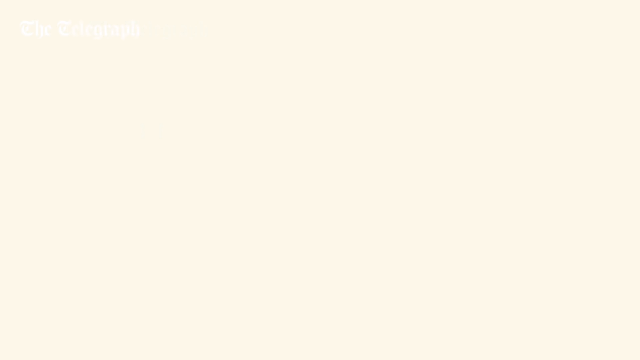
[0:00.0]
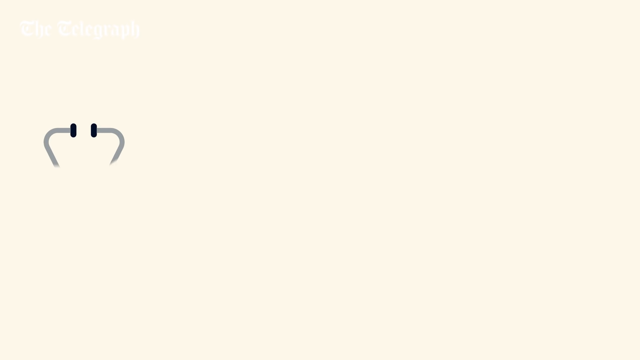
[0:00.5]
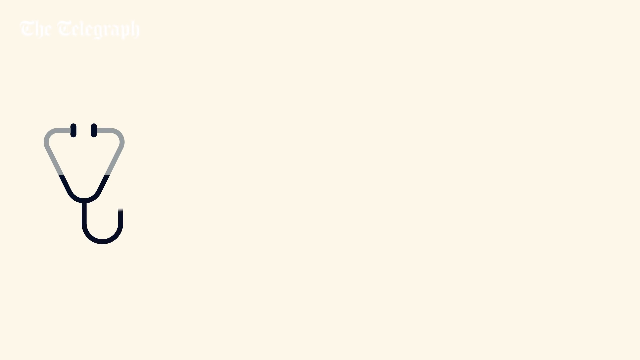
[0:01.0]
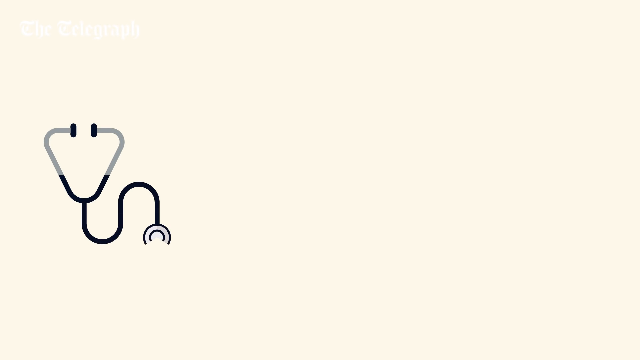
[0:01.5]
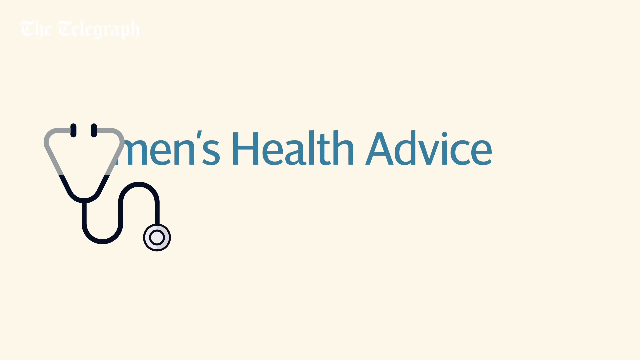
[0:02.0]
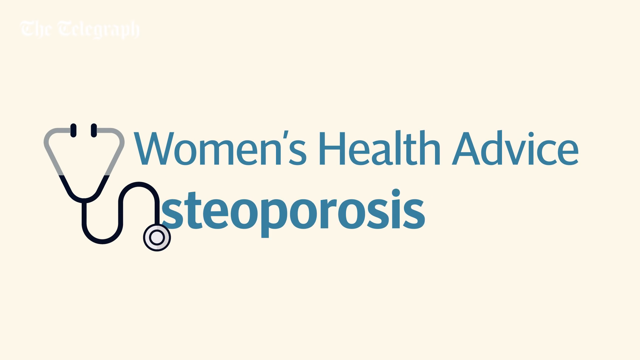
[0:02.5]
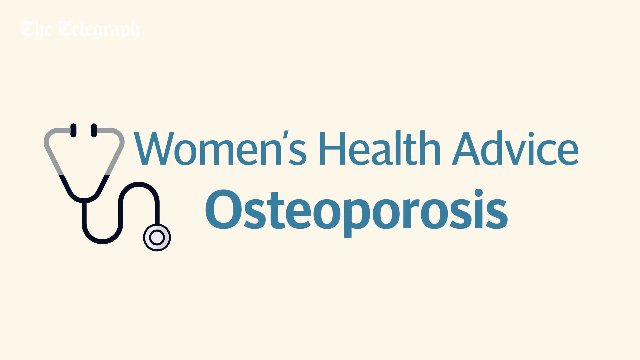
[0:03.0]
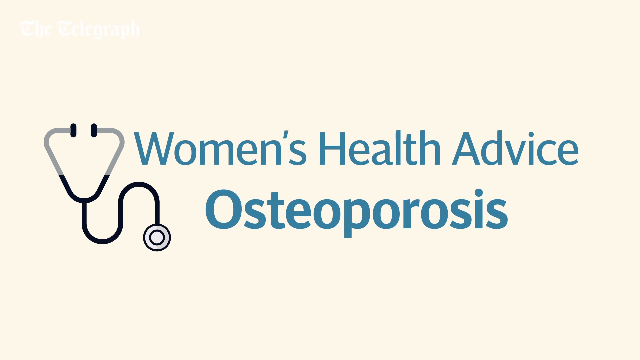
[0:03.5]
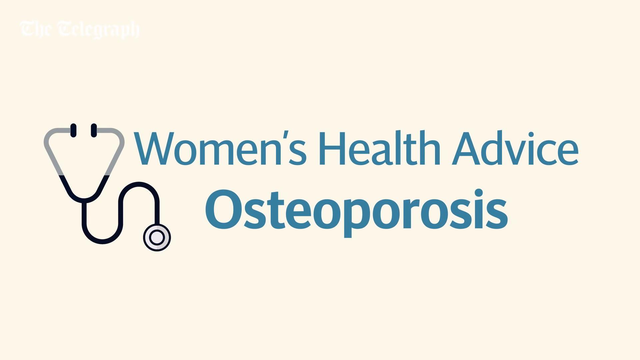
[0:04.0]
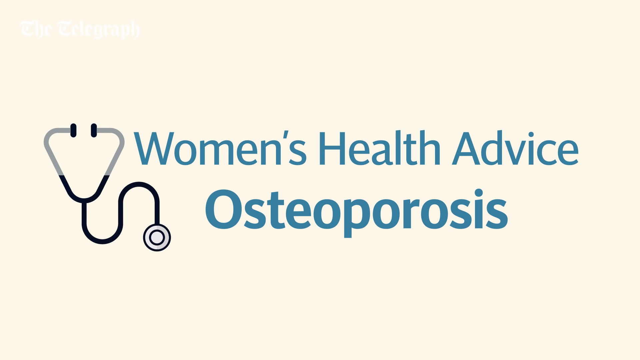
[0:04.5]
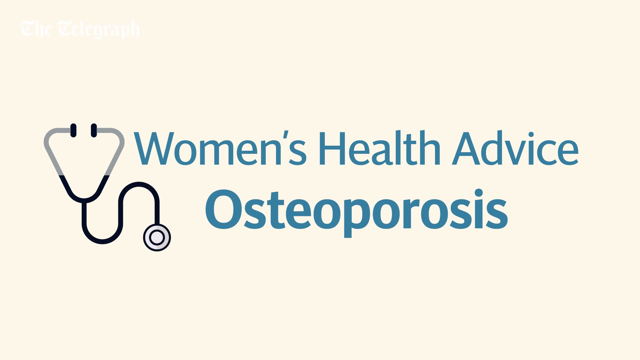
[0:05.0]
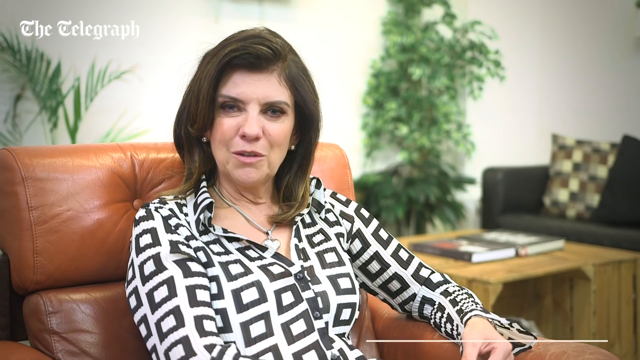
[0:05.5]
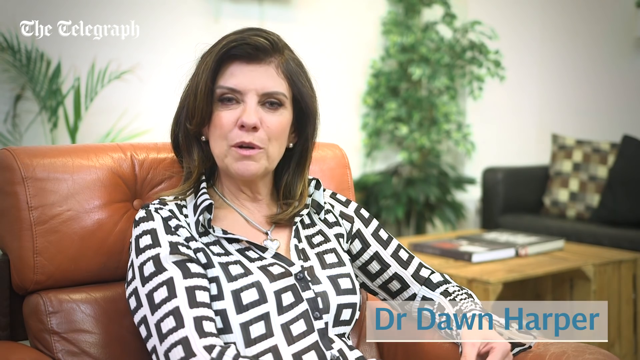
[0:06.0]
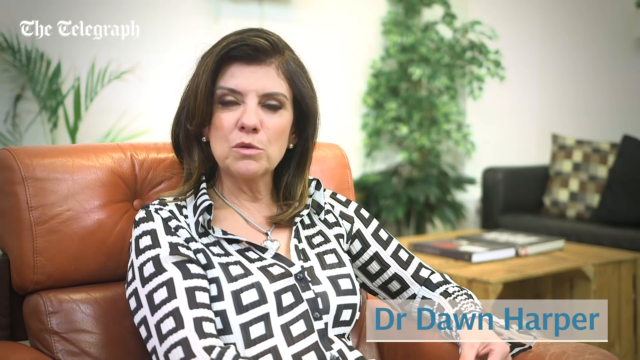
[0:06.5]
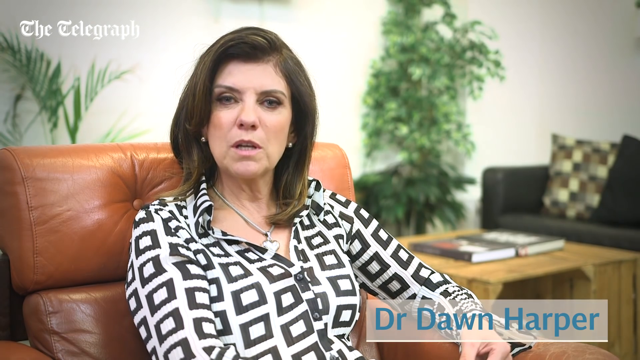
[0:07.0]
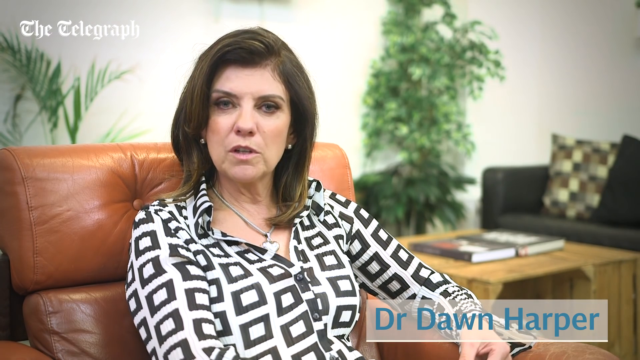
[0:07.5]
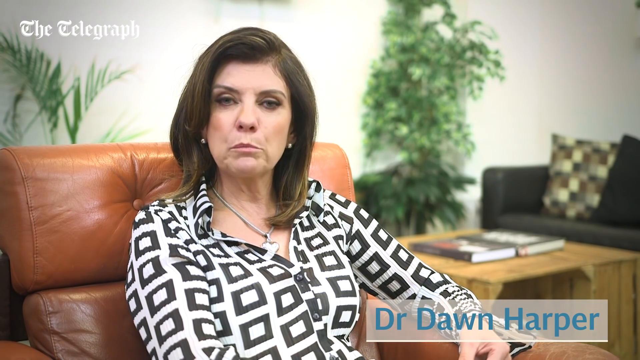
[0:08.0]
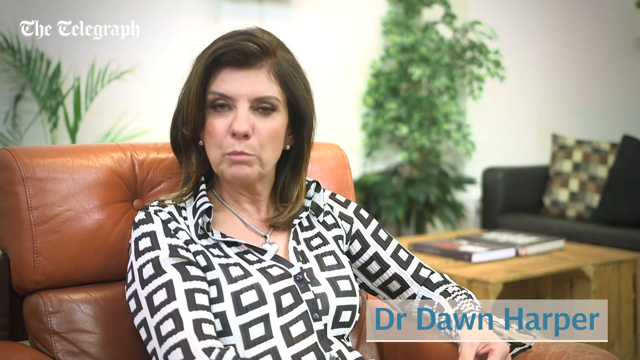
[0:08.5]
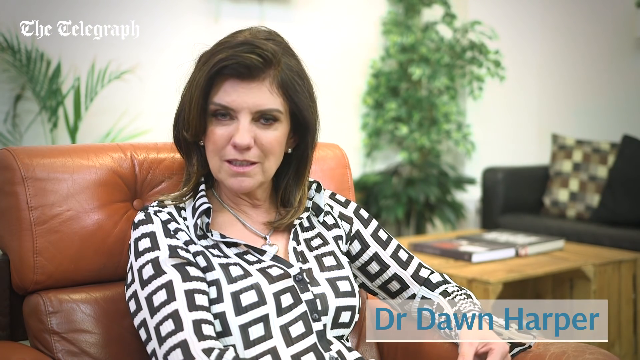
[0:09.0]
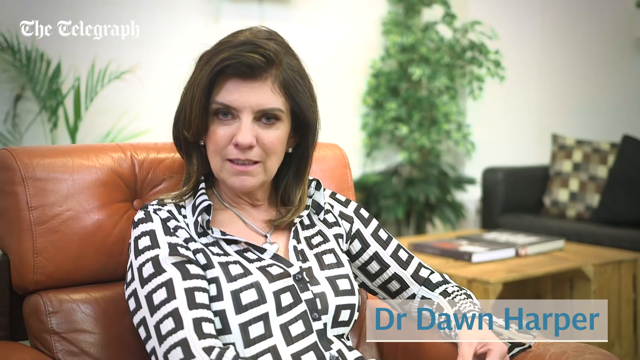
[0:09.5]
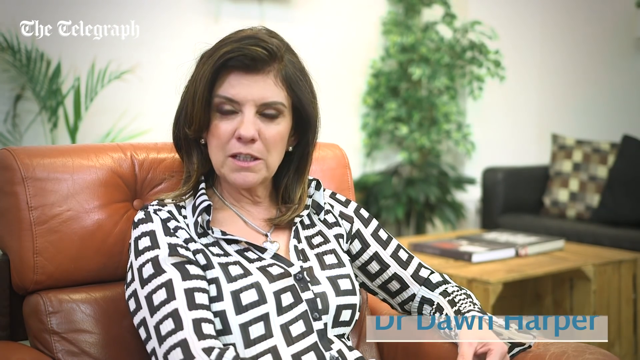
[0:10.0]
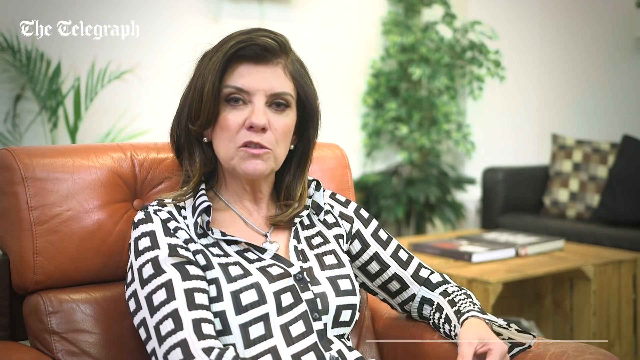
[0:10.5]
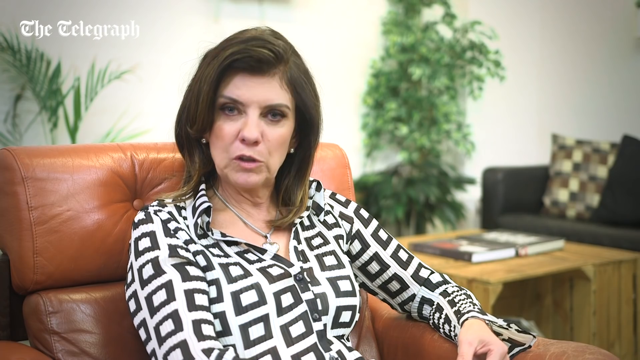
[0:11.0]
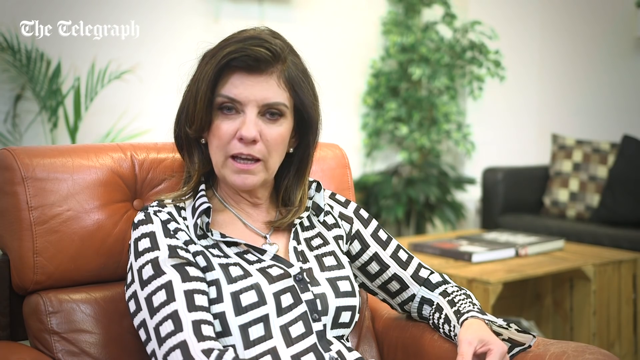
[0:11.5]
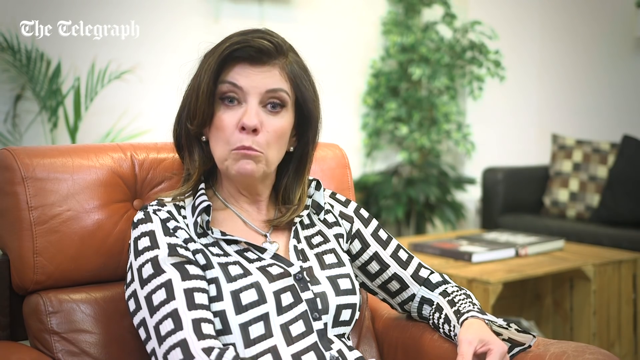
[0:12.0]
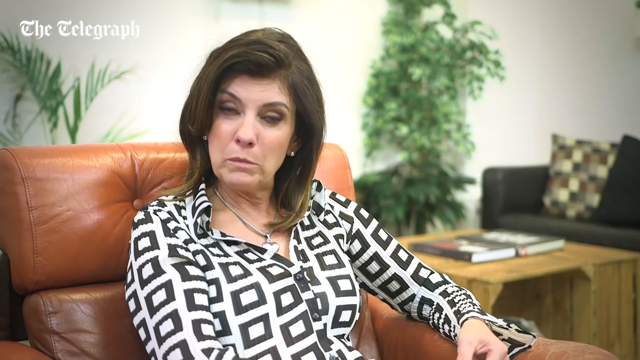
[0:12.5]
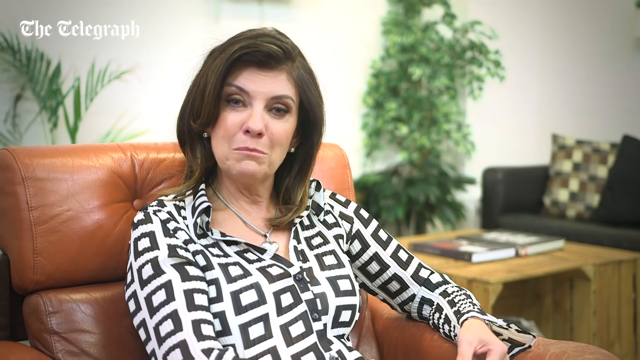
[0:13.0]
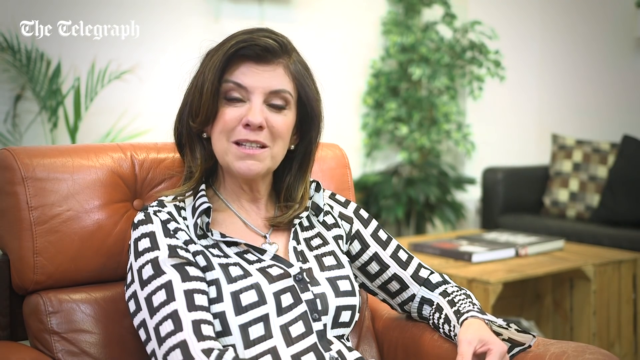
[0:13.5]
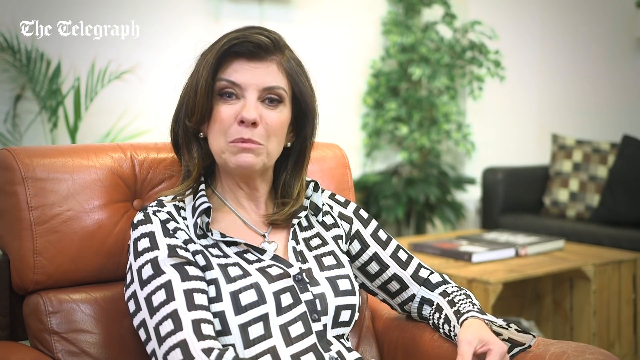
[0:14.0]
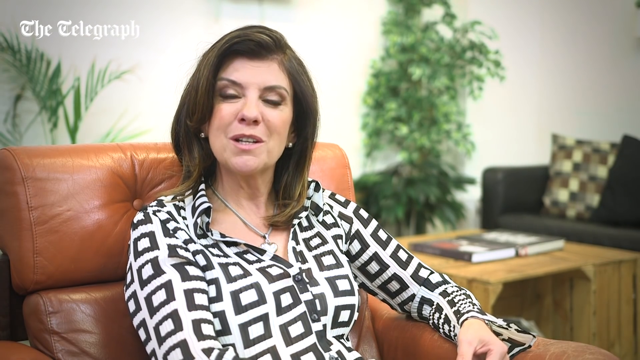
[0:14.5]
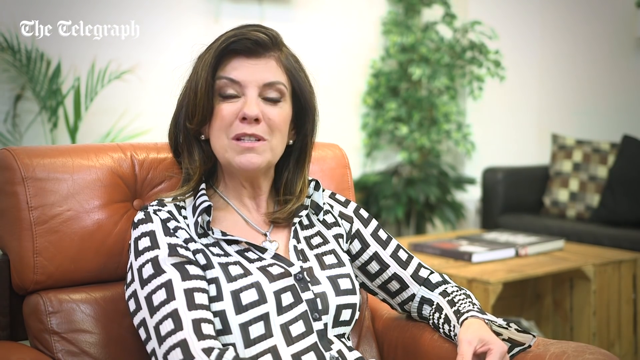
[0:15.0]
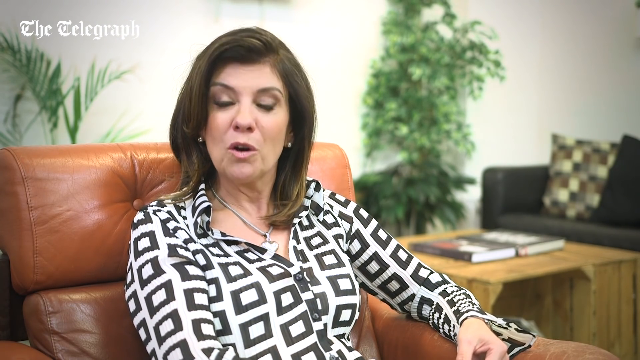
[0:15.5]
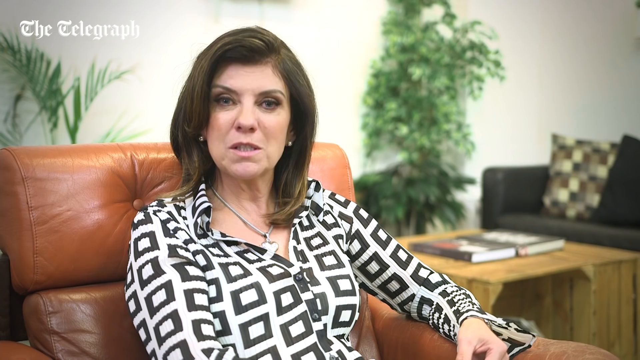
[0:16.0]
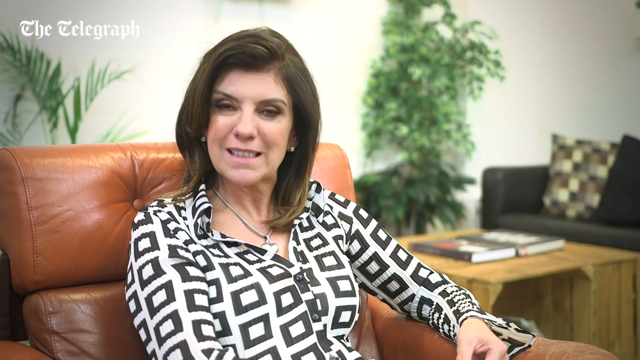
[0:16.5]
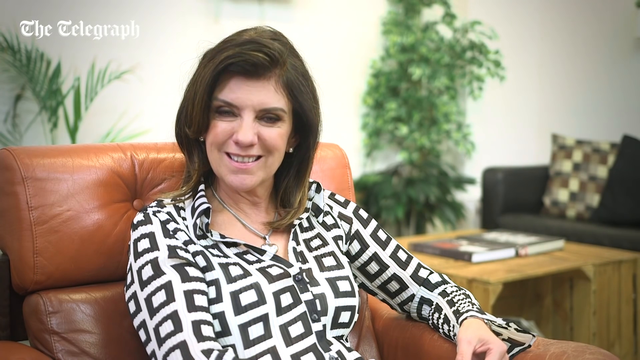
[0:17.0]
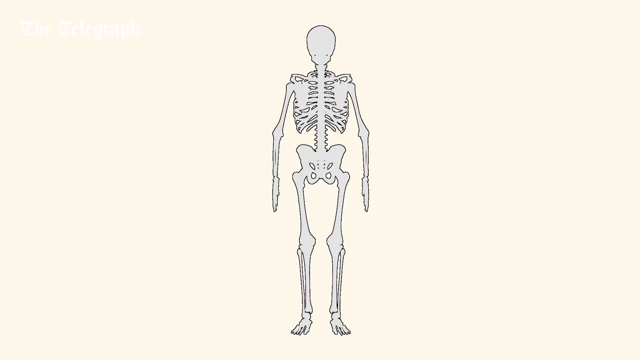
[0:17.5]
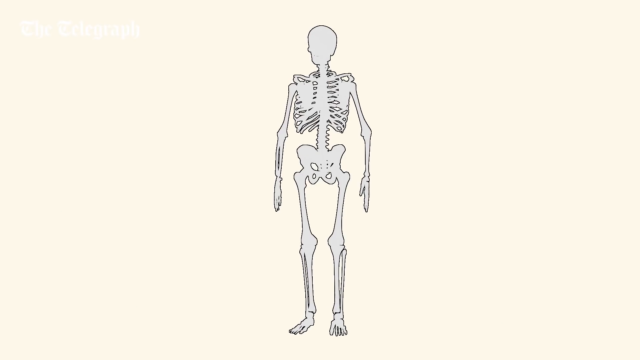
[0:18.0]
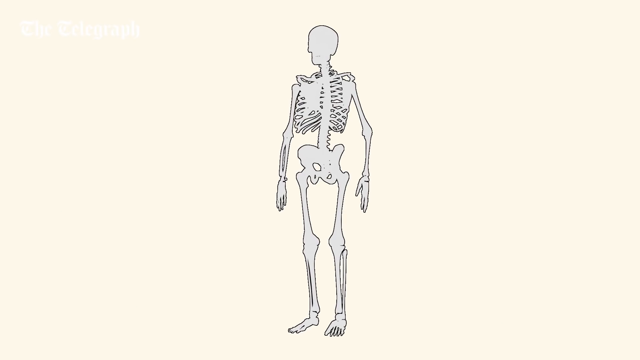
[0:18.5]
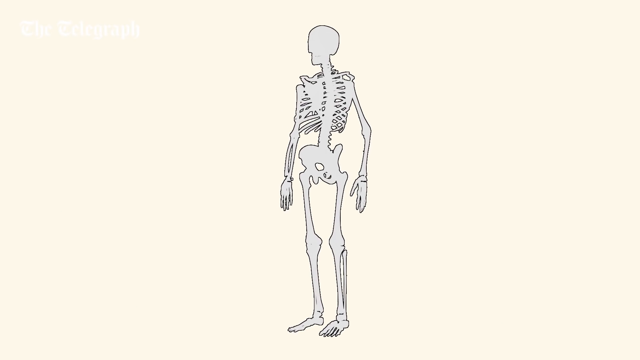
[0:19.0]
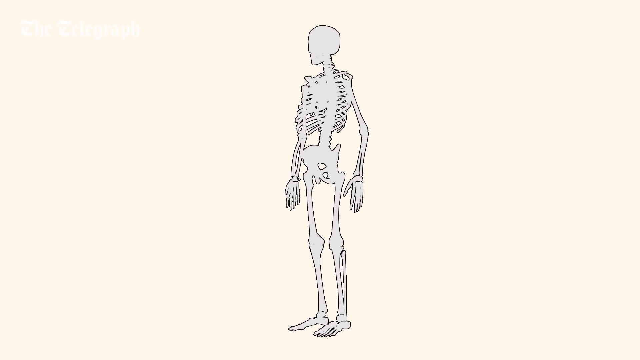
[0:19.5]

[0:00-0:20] On a cream background, the Telegraph logo is in the top left corner. A stethoscope appears on the screen piece by piece, with the bottom bit appearing last, and blue text shoots from the stethoscope to the right-hand side of the screen reading "women's health advice osteoporosis"; "osteoporosis" is in bold blue text, while "women's health advice" is not bold. Dr. Dawn Harper then appears on the screen. She wears a white shirt with black squares on it and a silver necklace, and has dark shoulder-length hair. She is sitting on an orange leather chair with lots of plants and greenery in the background: there is a tall shrub in the corner at the back and a tall shrub directly behind her, as well as a coffee table behind her with two coffee table books on it and a black sofa with two cushions on it. Her name is in the bottom right of the screen in blue, reading "Dr. Dawn Harper", and she speaks to the camera. A skeleton then appears on the screen, turning around.